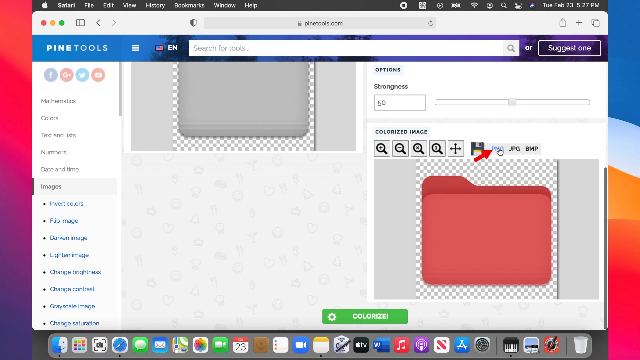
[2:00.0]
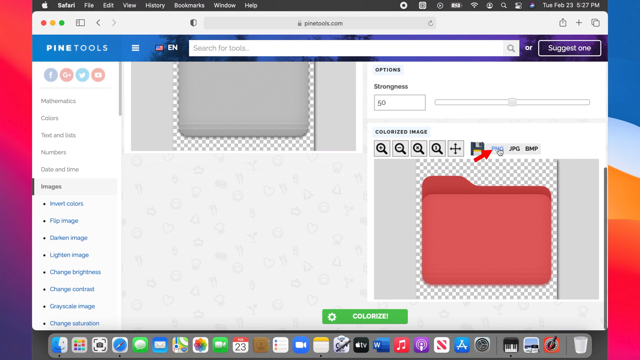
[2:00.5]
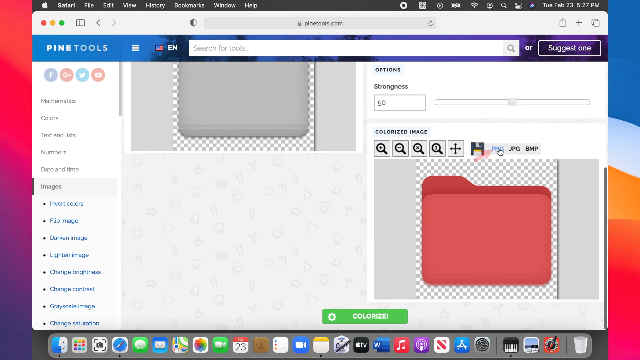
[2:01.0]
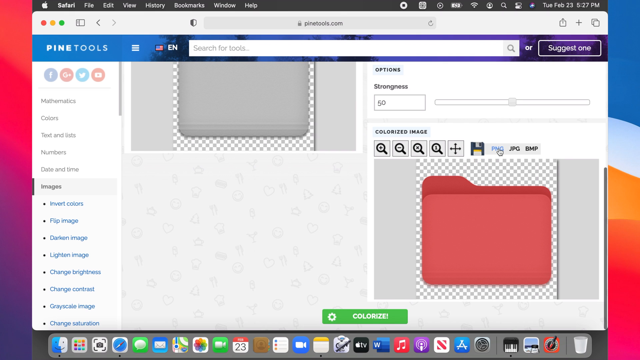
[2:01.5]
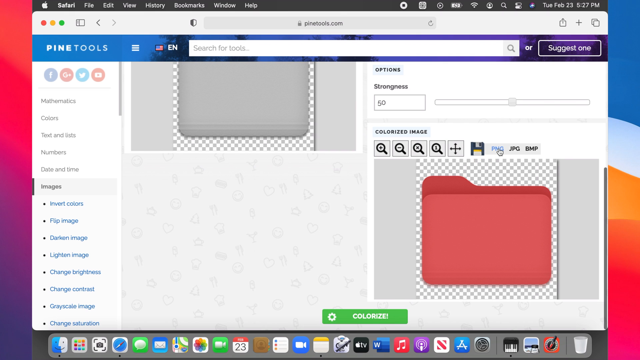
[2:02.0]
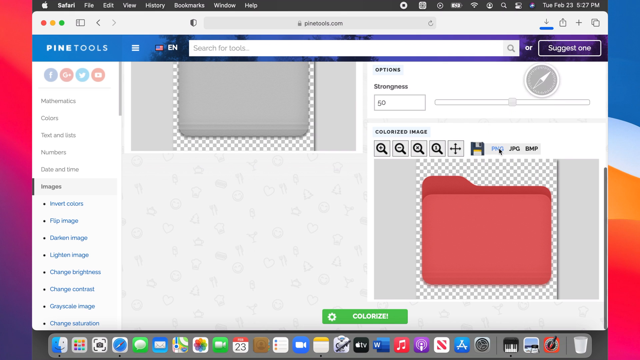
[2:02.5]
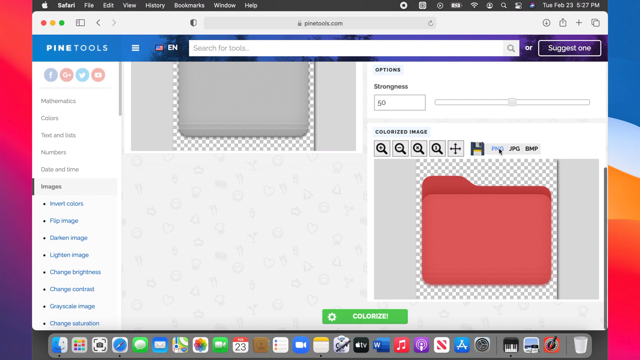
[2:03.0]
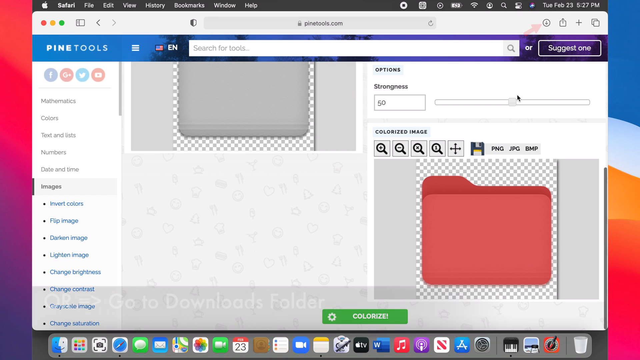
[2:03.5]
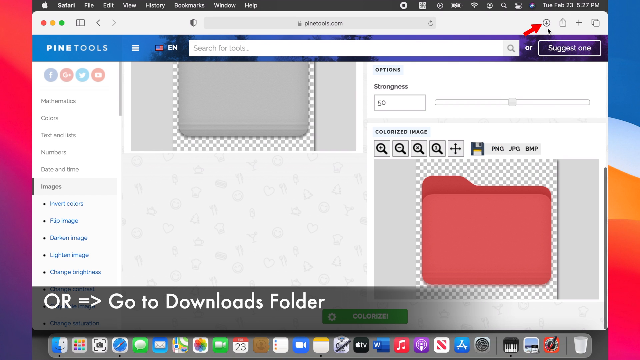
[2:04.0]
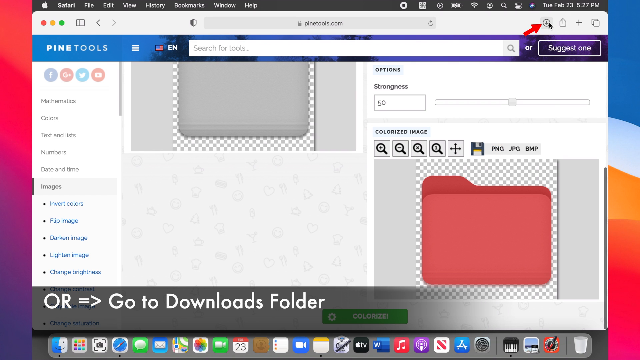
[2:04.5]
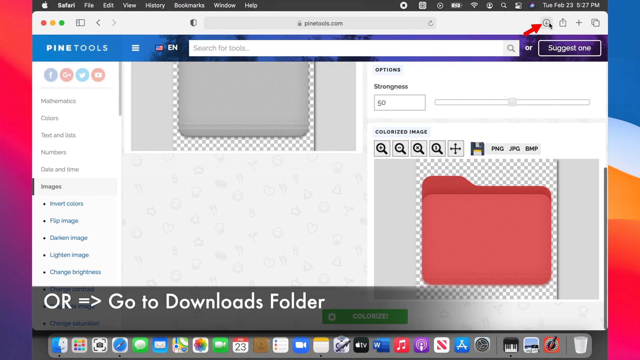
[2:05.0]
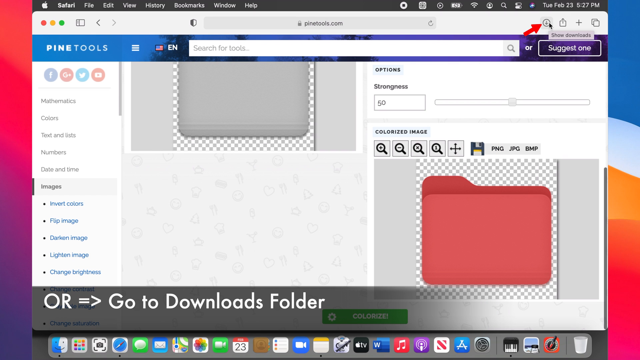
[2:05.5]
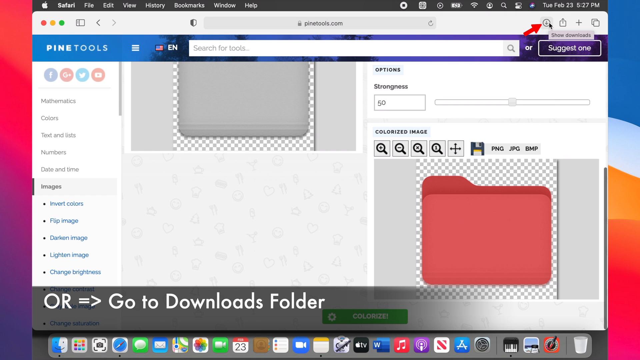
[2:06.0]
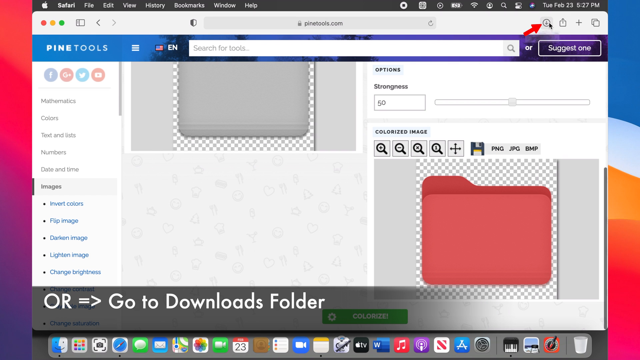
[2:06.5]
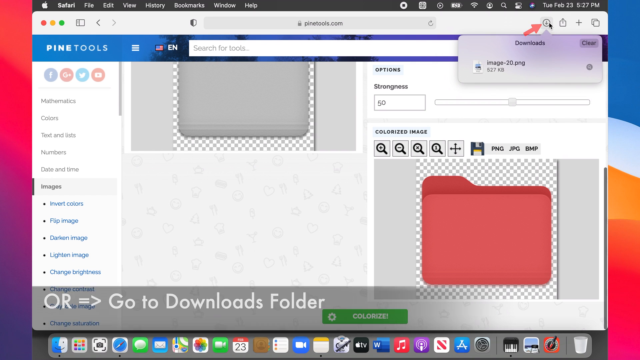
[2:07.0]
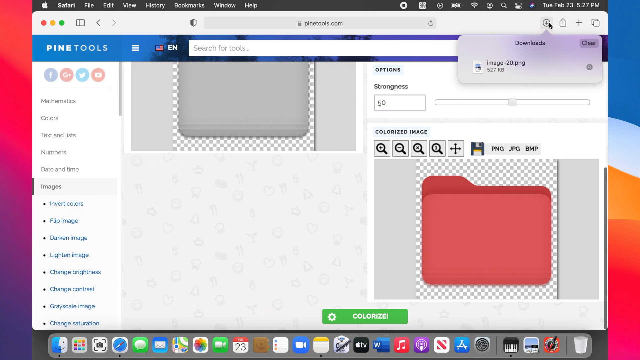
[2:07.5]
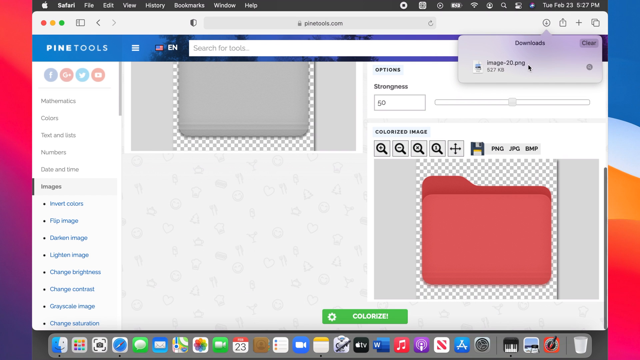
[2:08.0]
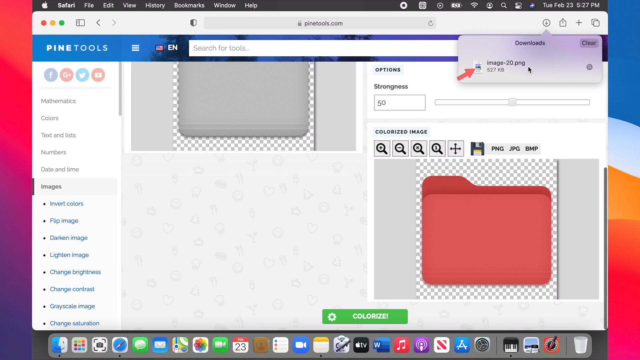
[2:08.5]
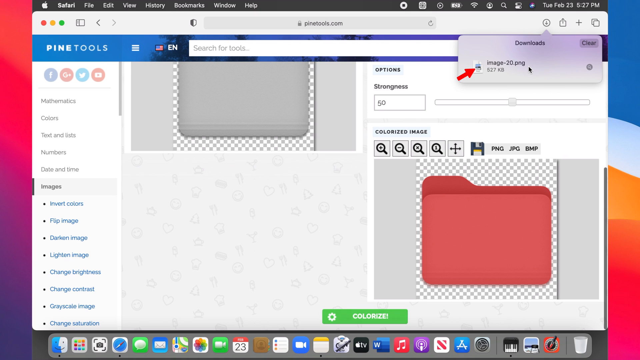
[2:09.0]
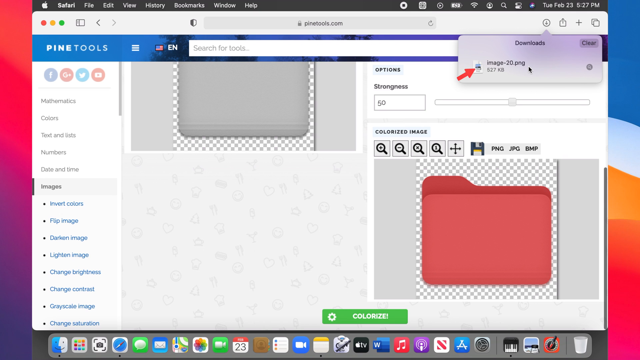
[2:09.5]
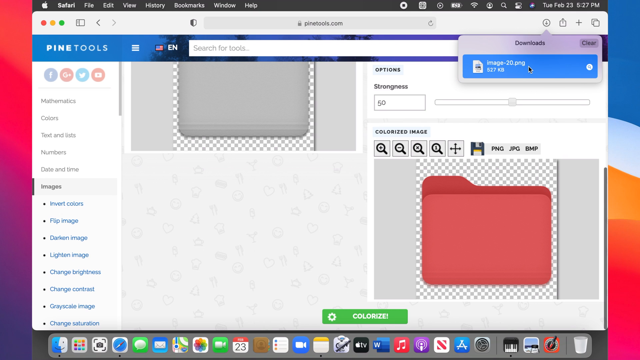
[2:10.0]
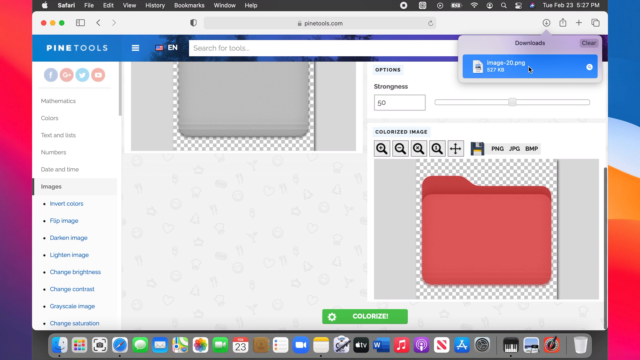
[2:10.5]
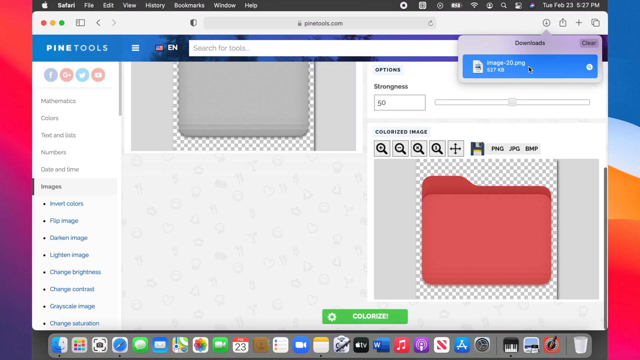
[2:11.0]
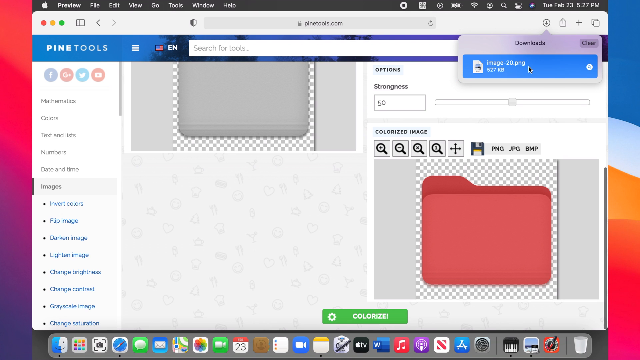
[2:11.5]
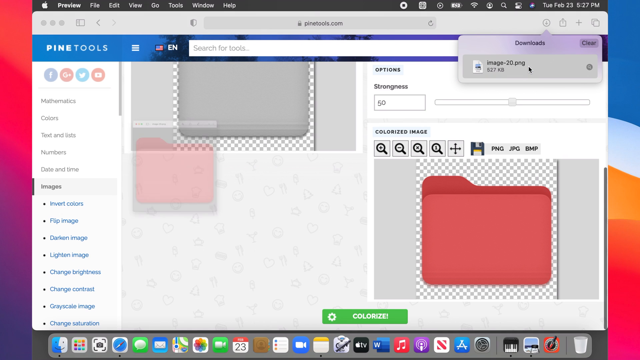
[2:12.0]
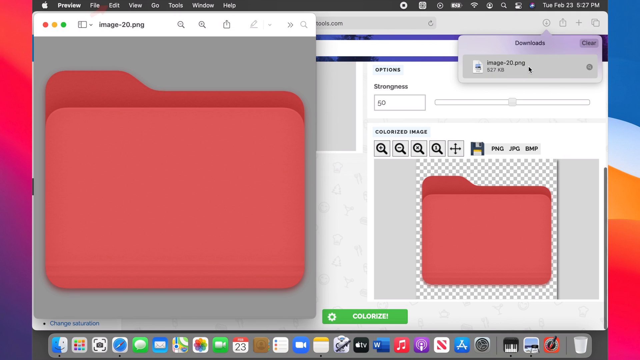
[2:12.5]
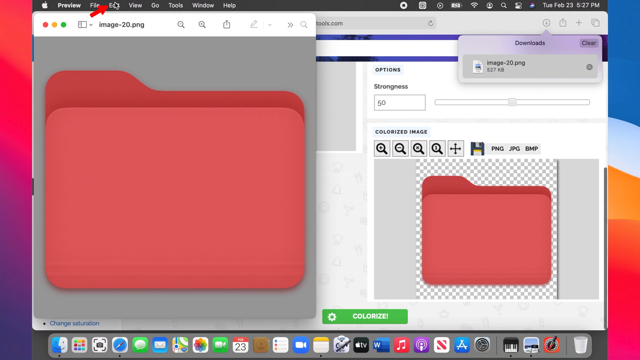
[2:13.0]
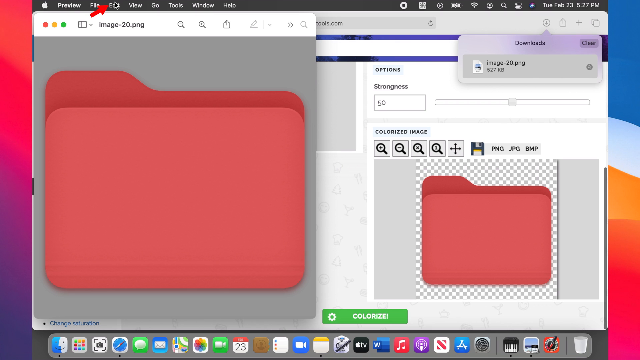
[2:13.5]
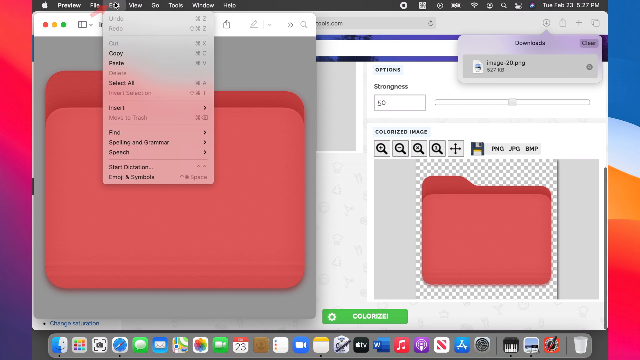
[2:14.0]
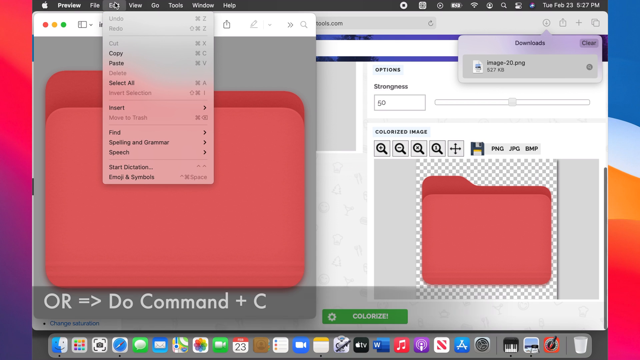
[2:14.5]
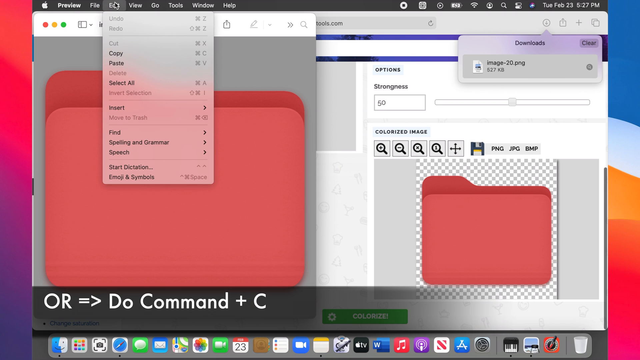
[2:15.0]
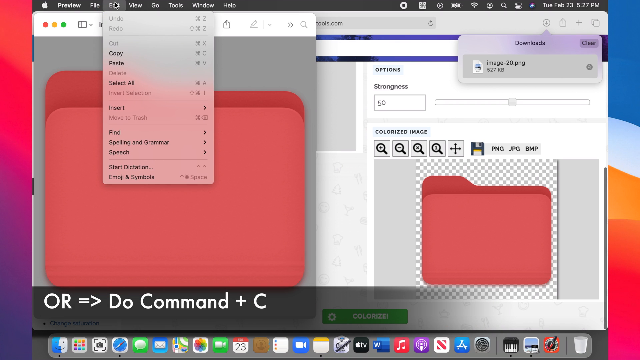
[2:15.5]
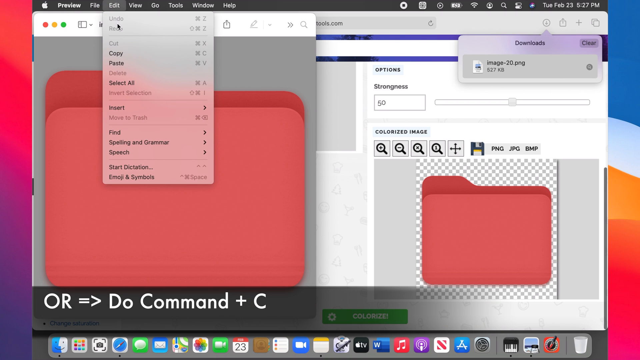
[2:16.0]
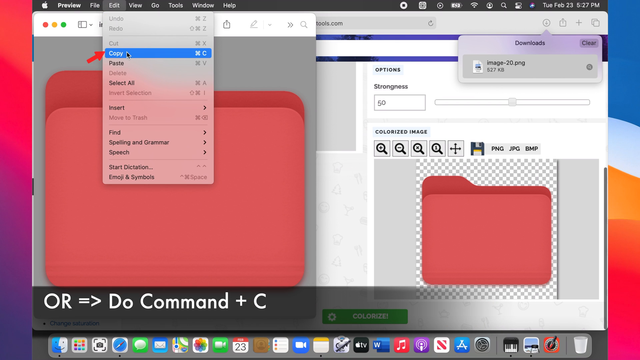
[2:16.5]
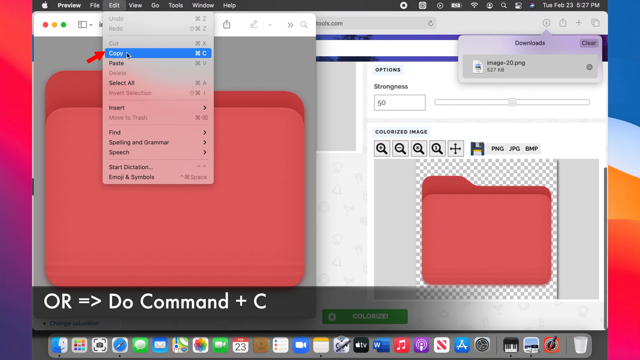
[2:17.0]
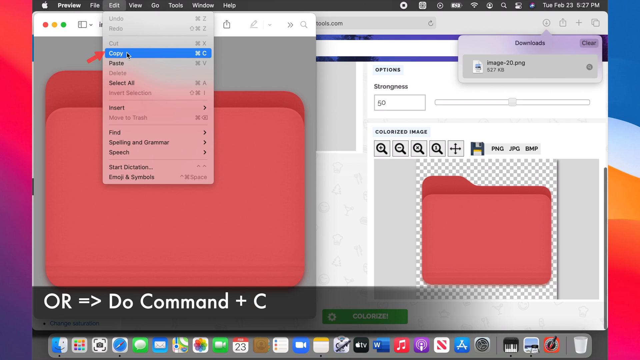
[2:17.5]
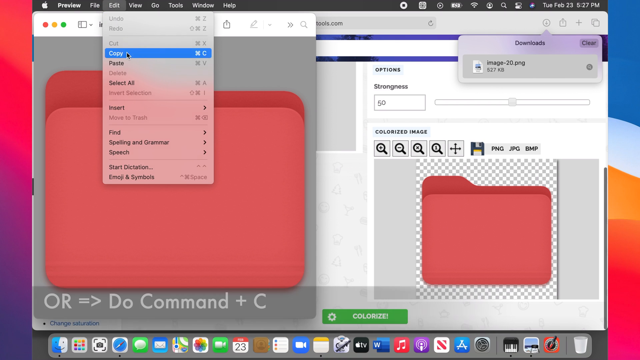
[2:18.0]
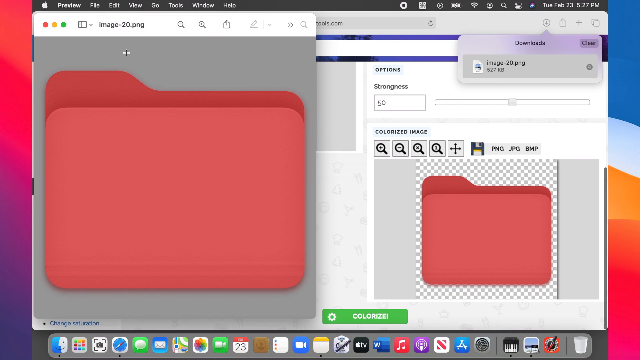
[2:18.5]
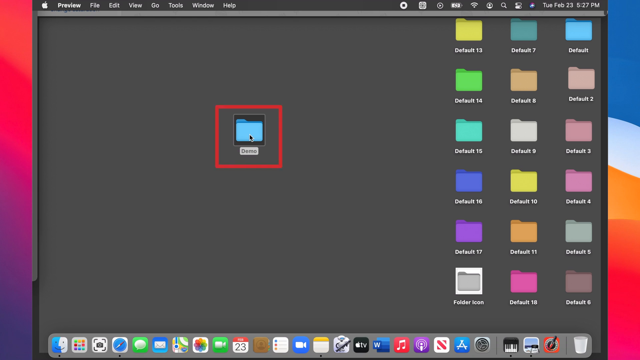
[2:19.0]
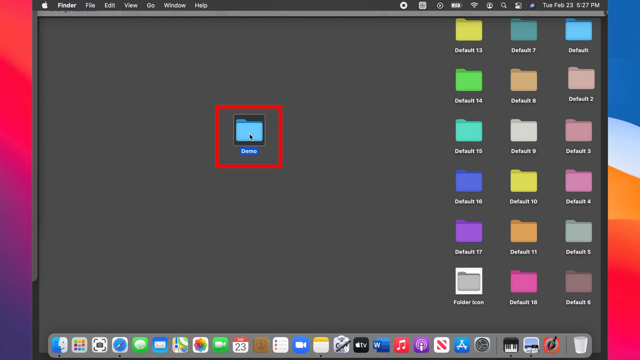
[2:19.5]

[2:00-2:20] A red arrow points to the top of the page, indicating a button in the upper right-hand portion labeled "downloads". When downloads is clicked, an image is available; a red highlighter shows to click the image, which the user does, bringing up the red folder just created. Text reads "command plus C". The user goes to Edit, then Copy, and puts the folder onto the desktop.